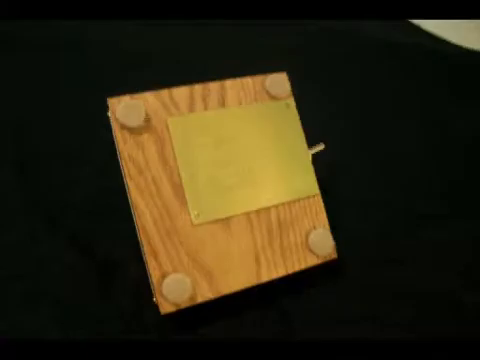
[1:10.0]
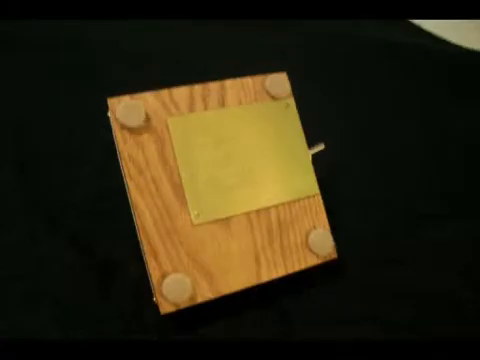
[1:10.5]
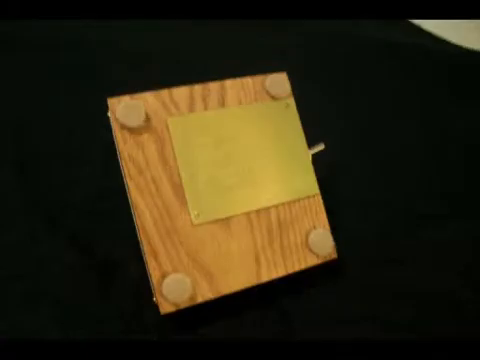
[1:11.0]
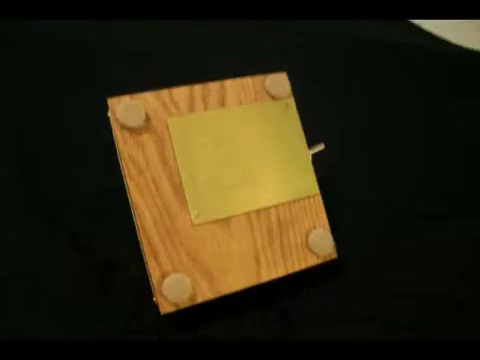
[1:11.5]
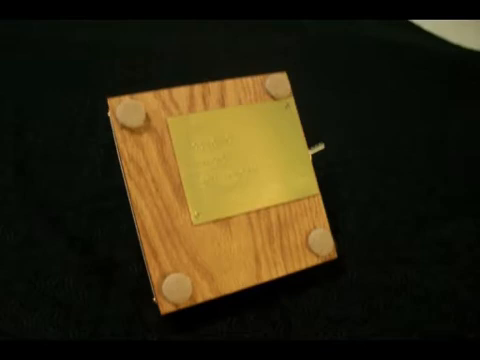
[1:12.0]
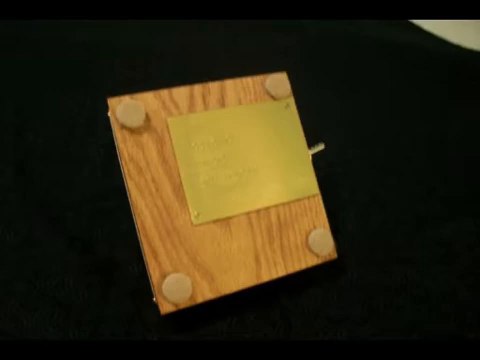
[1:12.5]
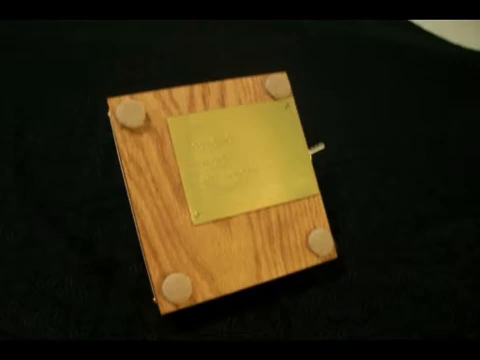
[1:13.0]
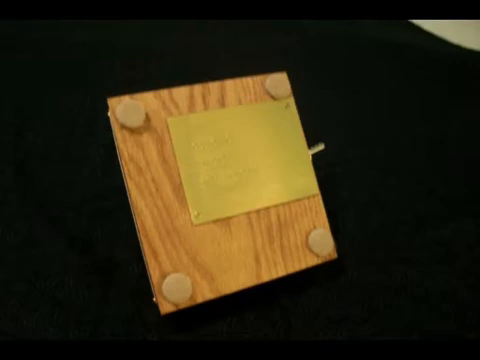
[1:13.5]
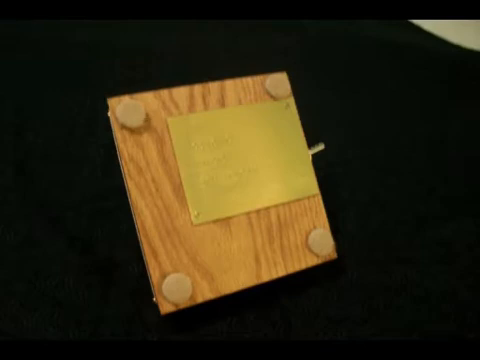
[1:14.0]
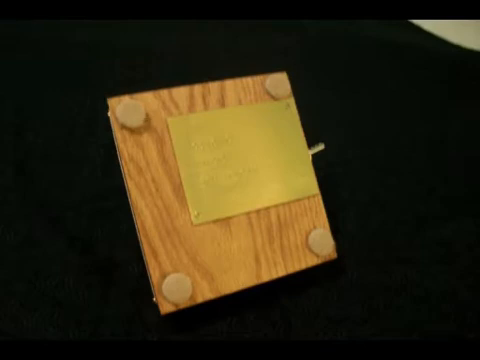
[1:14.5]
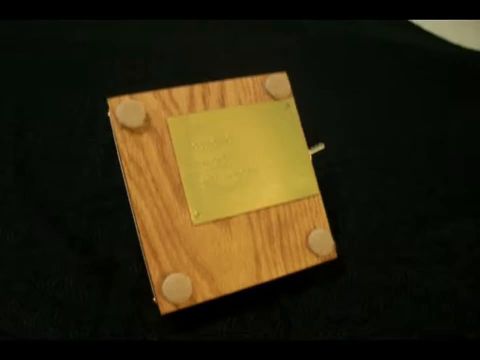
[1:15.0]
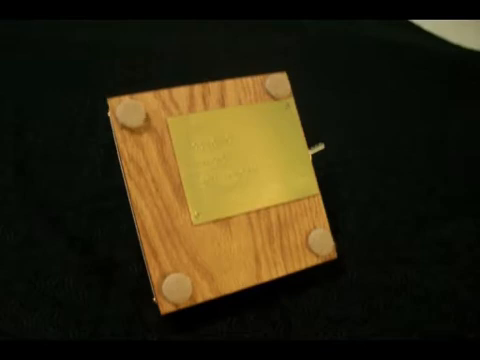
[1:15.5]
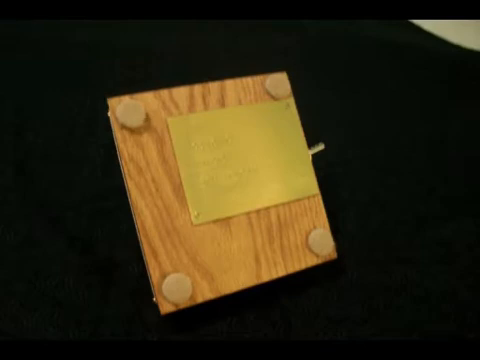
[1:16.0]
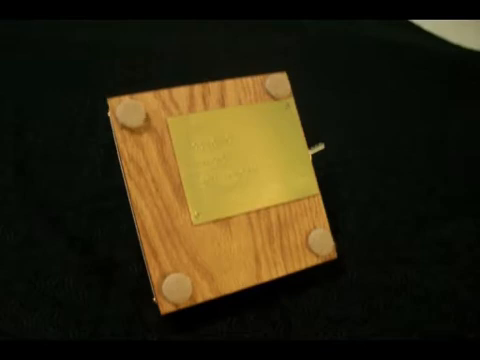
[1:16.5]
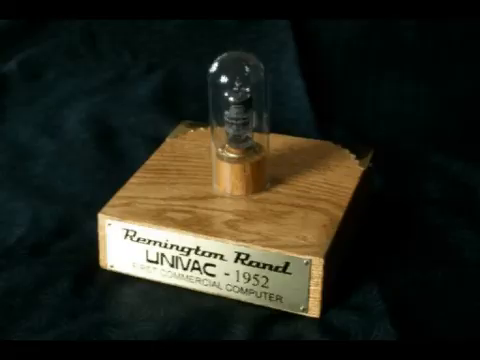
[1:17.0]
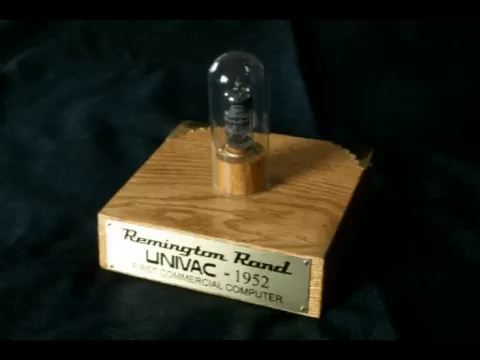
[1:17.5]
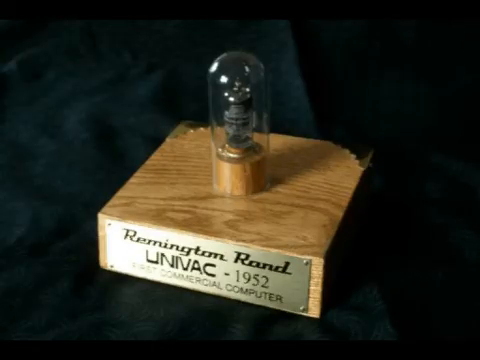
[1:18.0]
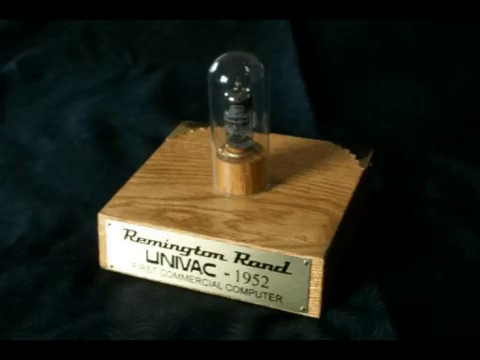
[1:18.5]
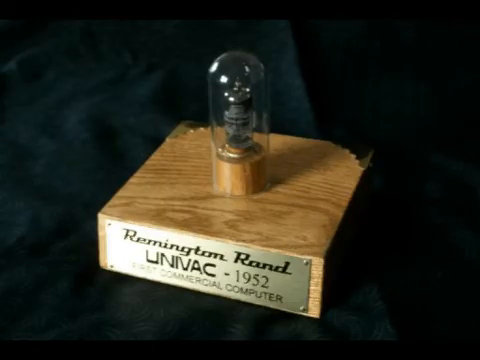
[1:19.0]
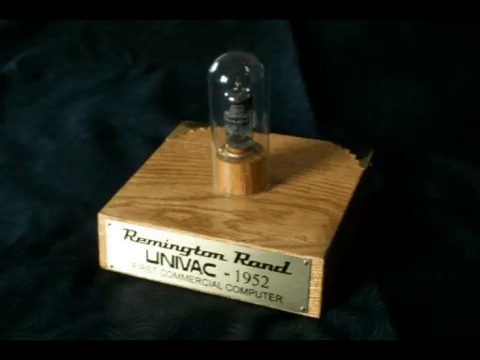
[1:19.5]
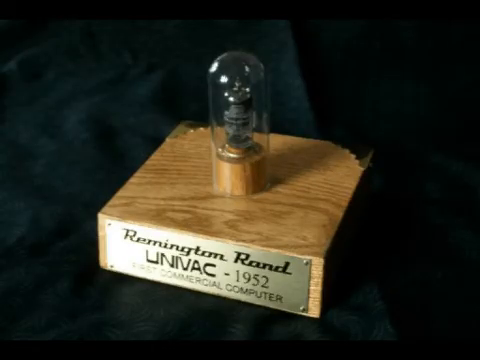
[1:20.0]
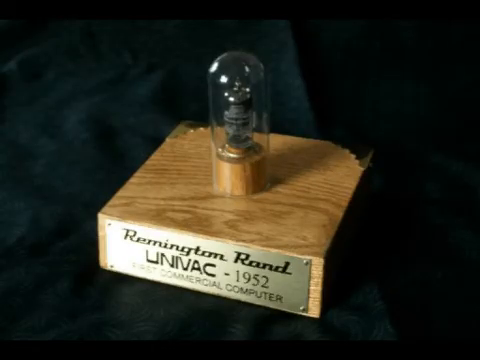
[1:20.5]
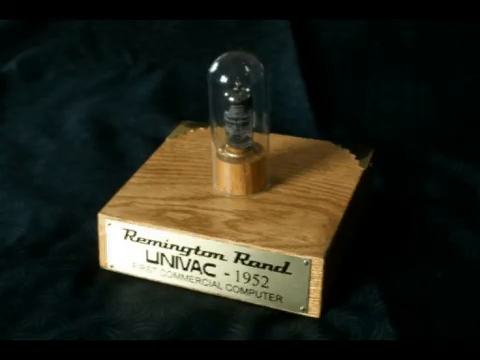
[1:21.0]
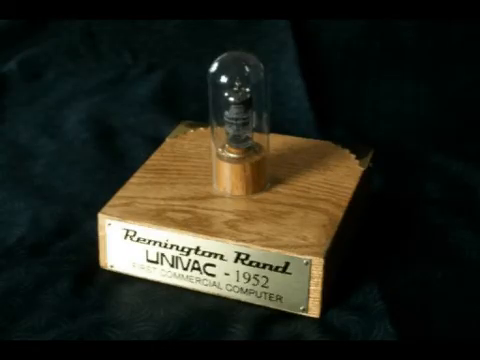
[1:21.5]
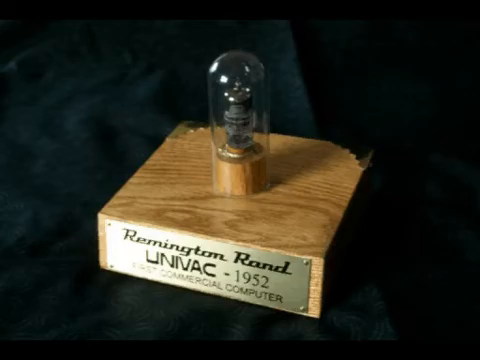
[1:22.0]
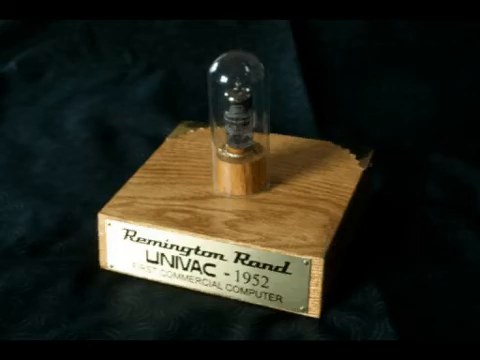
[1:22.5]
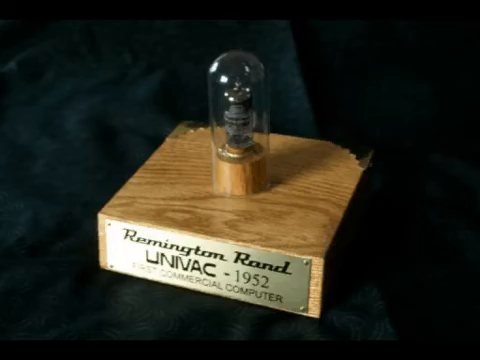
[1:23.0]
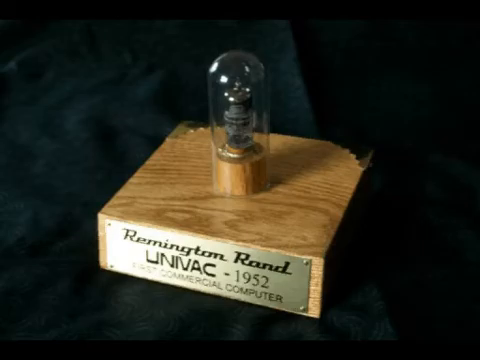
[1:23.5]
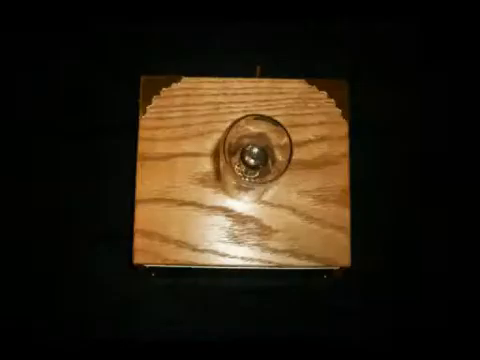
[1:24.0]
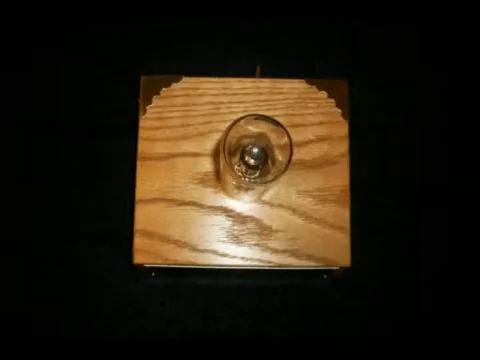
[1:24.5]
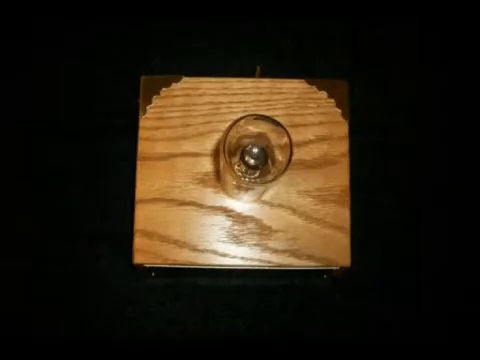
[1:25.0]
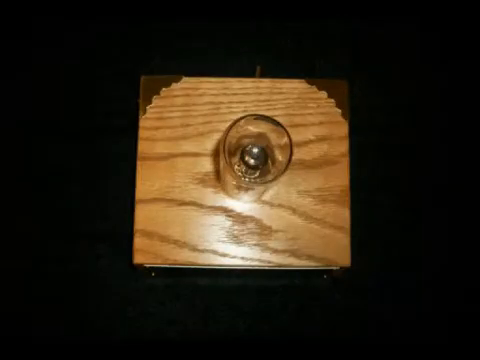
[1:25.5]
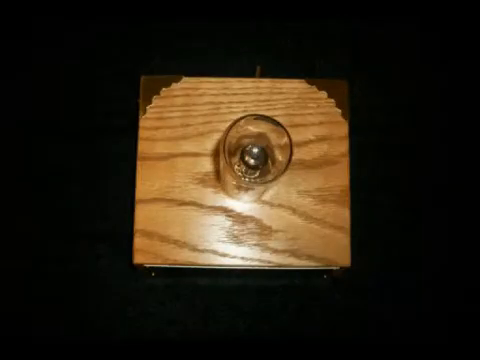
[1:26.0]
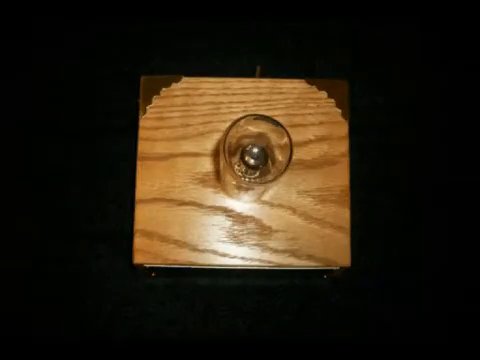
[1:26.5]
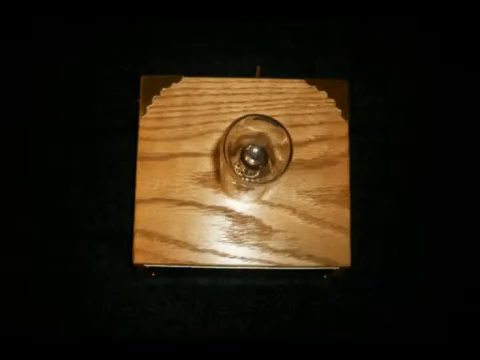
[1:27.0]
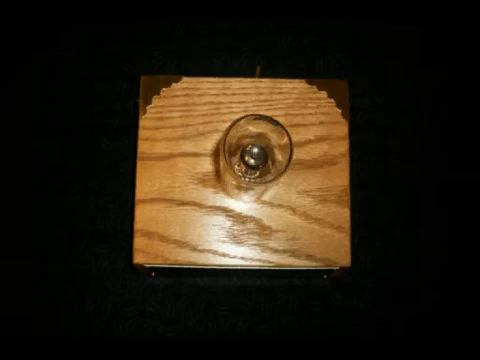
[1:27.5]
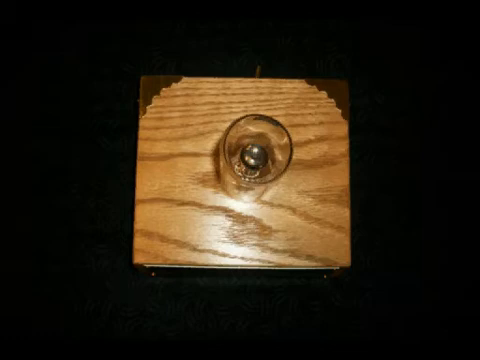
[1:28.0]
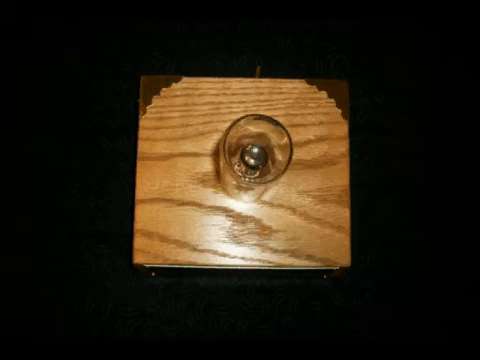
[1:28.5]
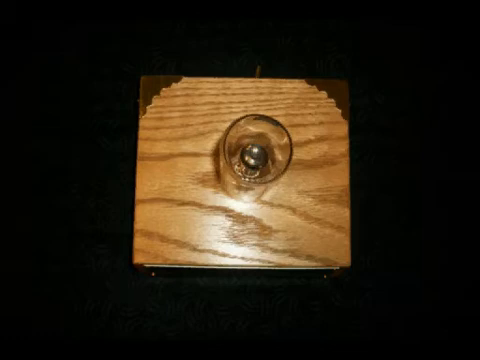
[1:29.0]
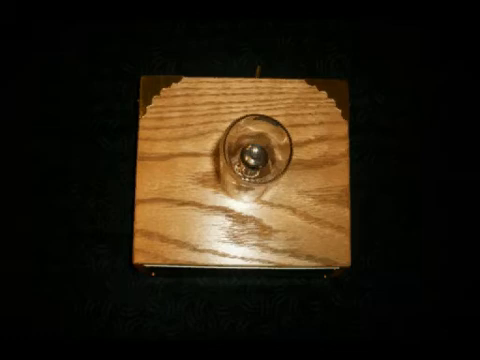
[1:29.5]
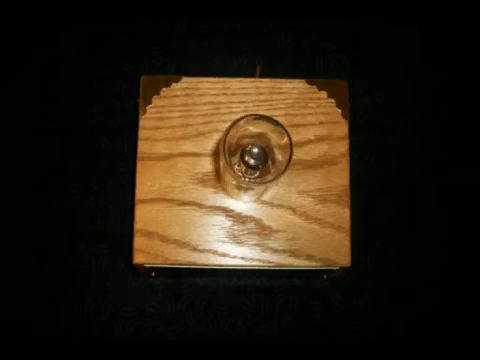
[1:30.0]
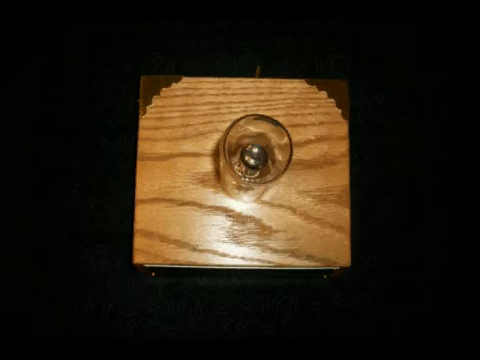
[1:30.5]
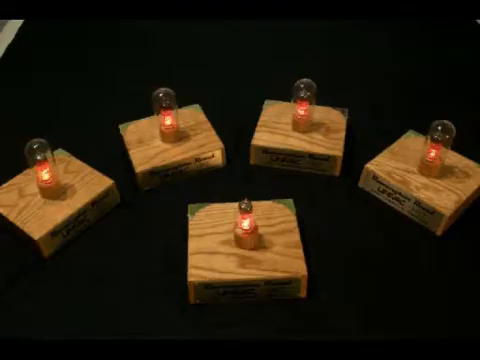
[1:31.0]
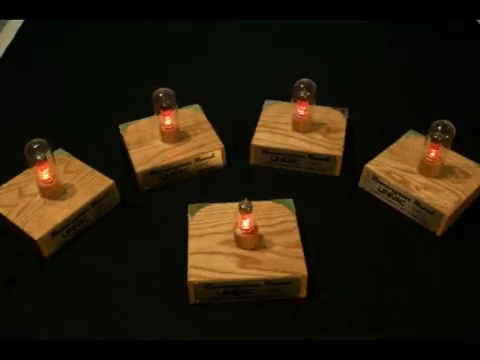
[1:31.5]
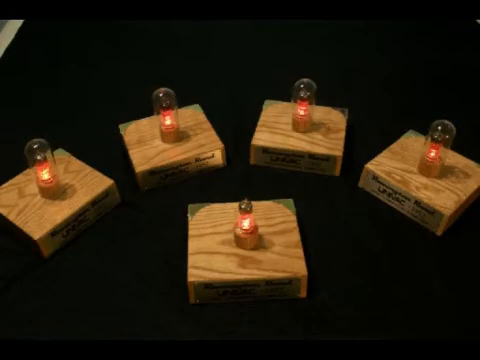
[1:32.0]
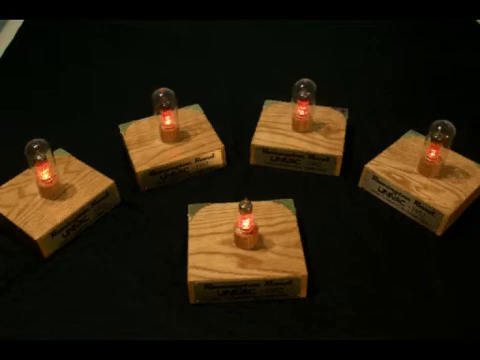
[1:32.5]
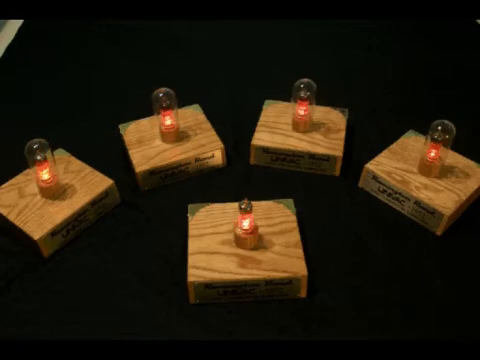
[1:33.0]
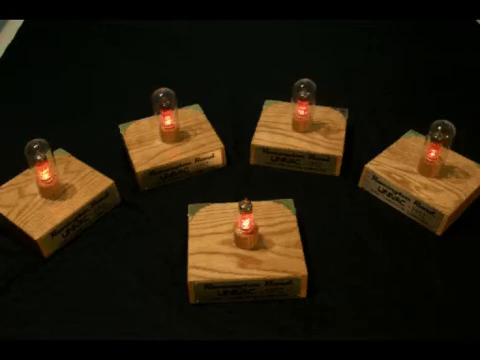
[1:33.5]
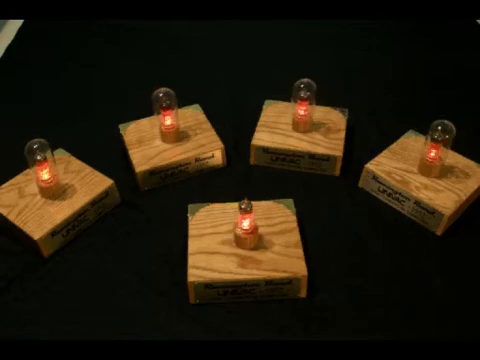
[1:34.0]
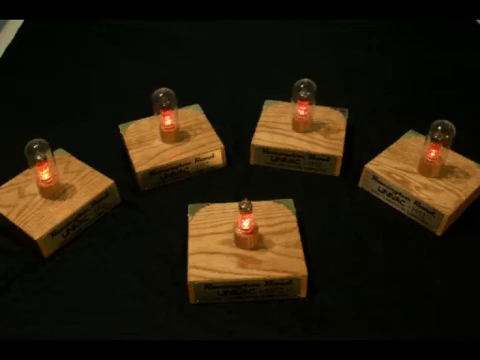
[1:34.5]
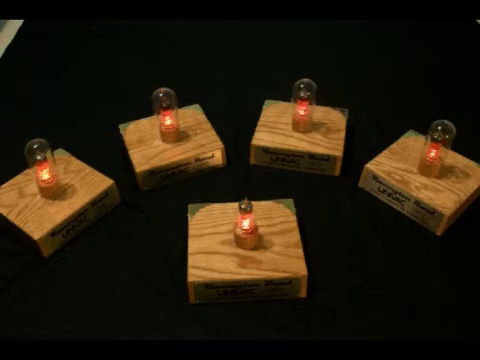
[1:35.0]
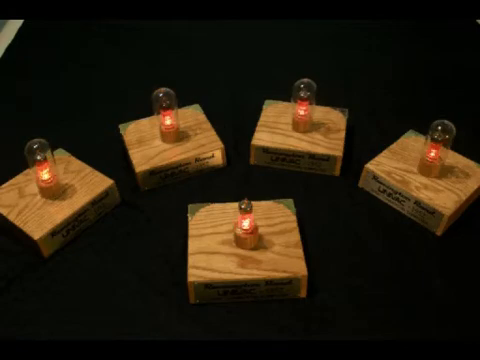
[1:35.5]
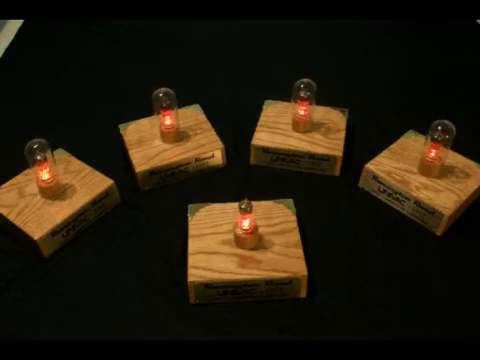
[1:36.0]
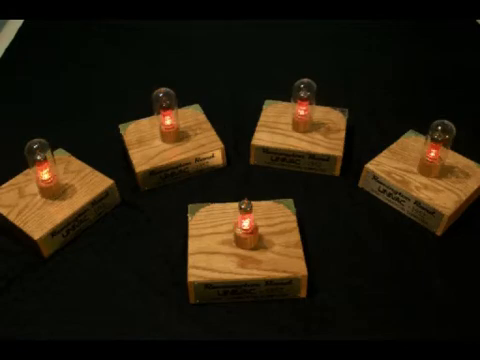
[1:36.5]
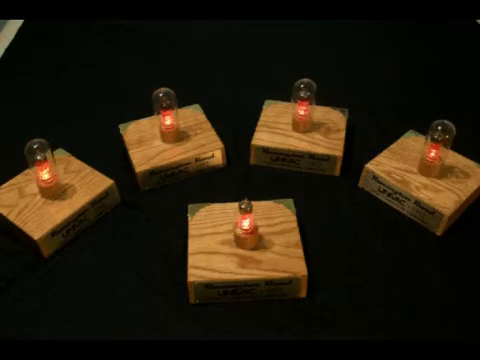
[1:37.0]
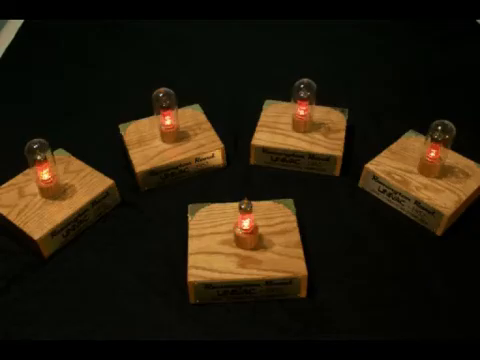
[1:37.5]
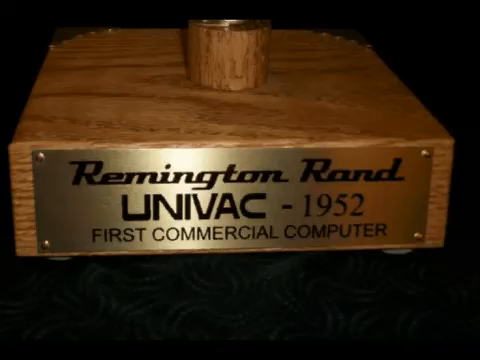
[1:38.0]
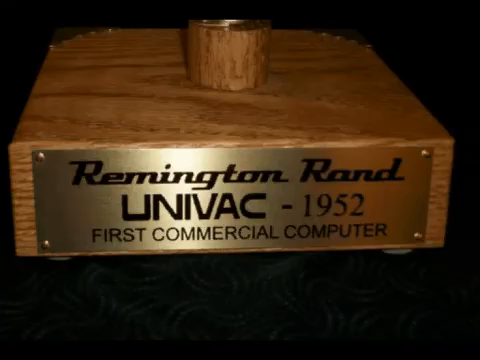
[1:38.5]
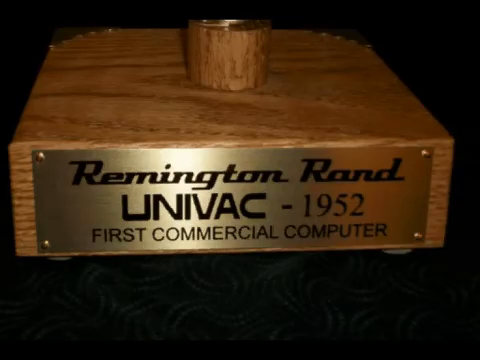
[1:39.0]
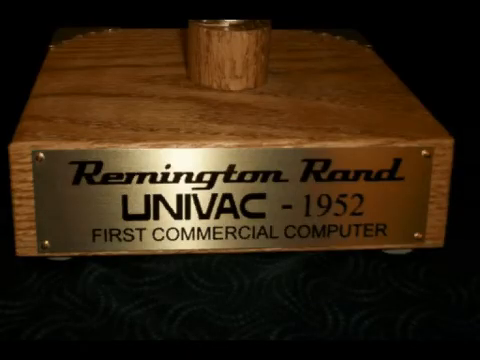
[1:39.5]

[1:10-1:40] The underside of a block of wood in a museum is shown. A brass plate is screwed into the underside, with a screw visible in the lower left corner and the upper right corner. It looks like three rows of text, but the text is too hard to read. A toggle is visible on the right side of the block. Each corner of the block has a felt protector, a circular soft felt base. The video then shows a top view of the block: a brass nameplate on the front has three rows of text, with the top row reading "Remington Rand" in cursive, the second row "Univac-1952", and the third row "First Commercial Computer" in all caps. The plate is attached with screws in each of the four corners. On the back side of the block, along the top, is a corner brass plate with a unique design. In the center of the block is an upraised section and a bulb with writing and white squiggles on it, inside another protective bulb.